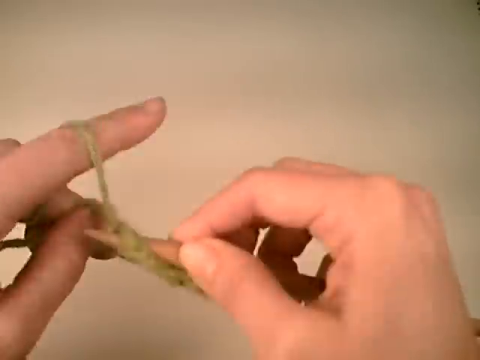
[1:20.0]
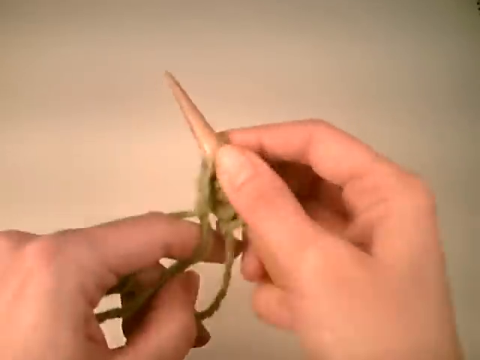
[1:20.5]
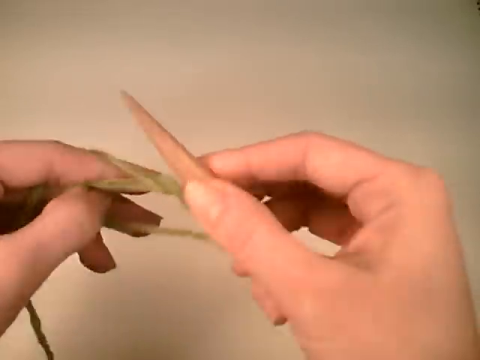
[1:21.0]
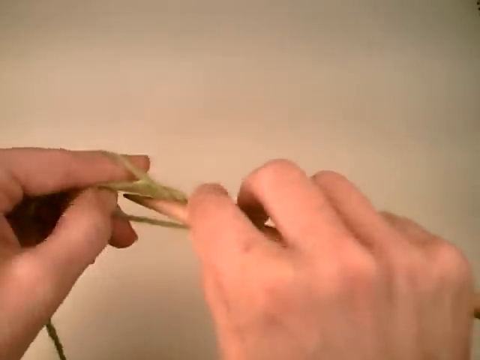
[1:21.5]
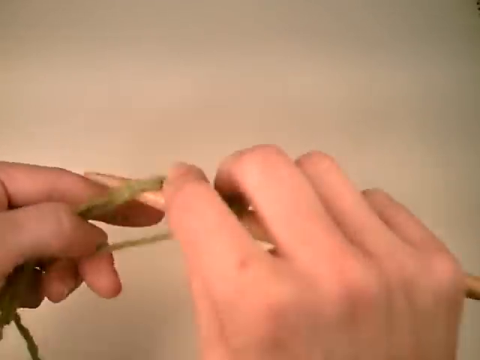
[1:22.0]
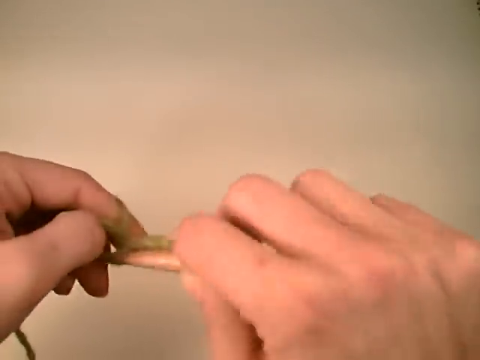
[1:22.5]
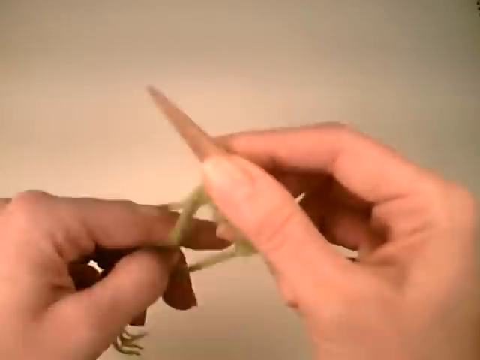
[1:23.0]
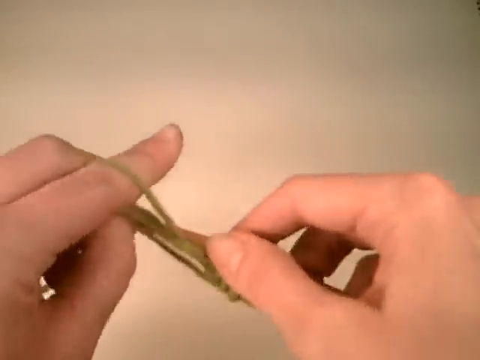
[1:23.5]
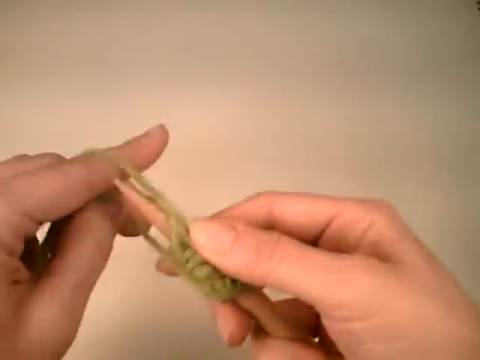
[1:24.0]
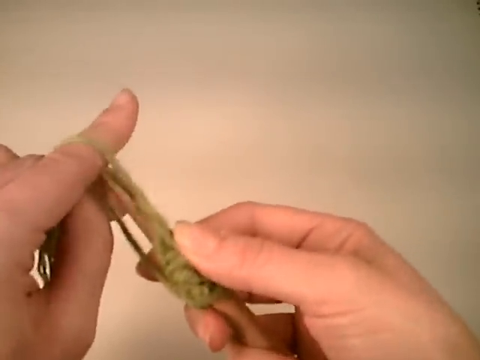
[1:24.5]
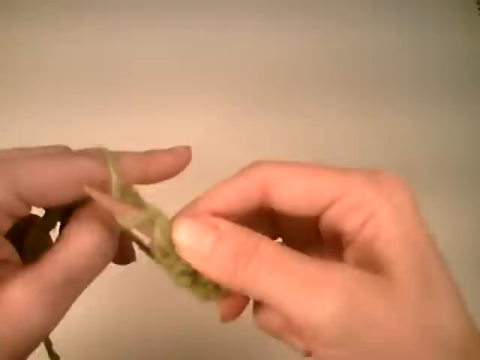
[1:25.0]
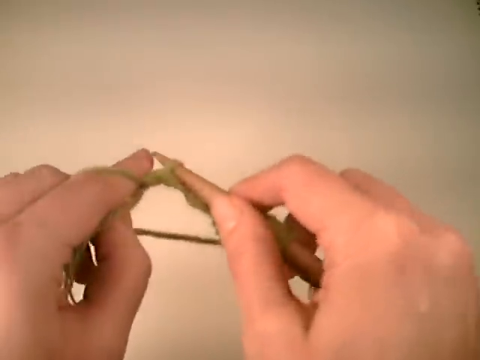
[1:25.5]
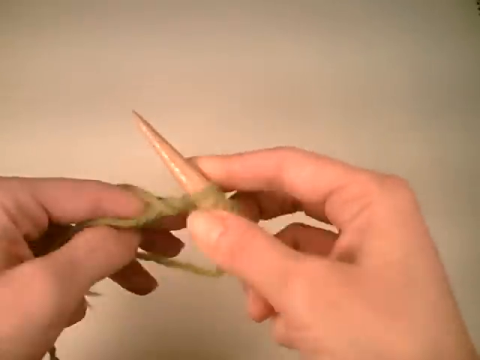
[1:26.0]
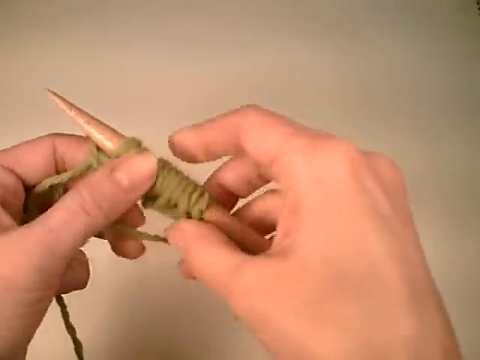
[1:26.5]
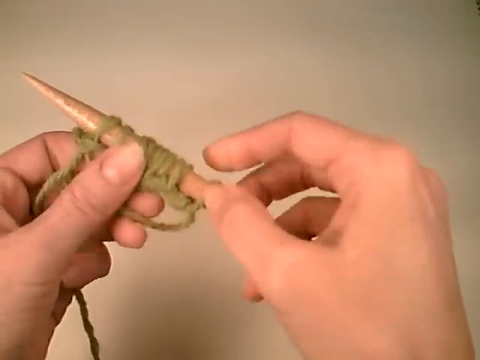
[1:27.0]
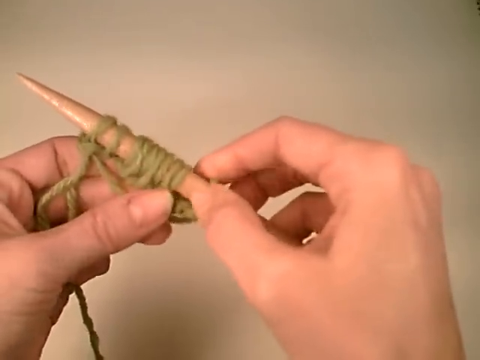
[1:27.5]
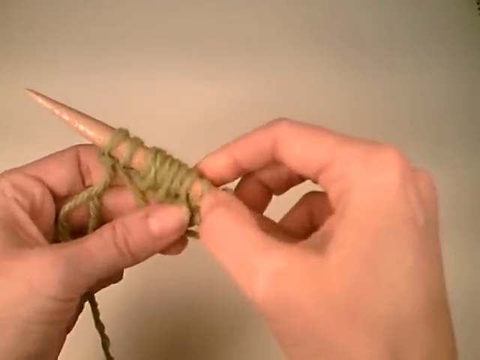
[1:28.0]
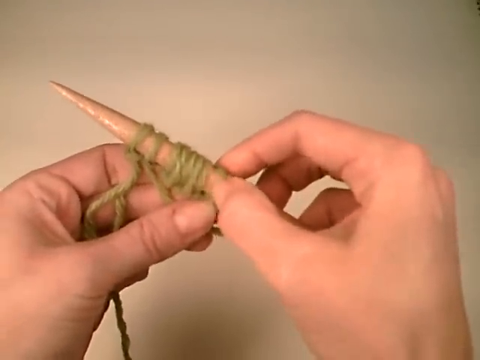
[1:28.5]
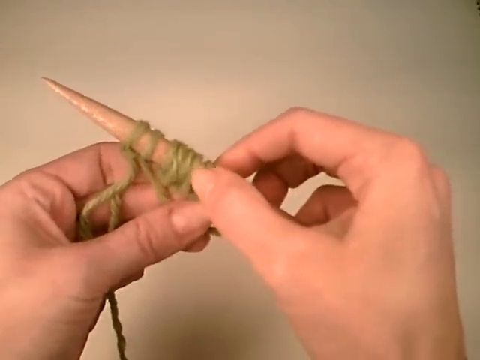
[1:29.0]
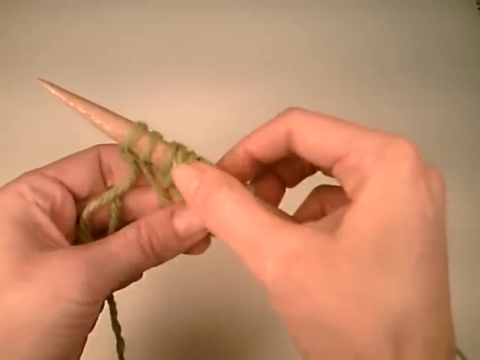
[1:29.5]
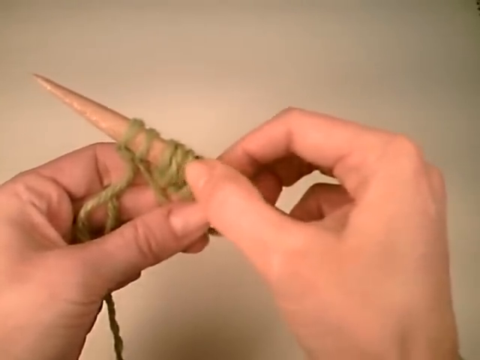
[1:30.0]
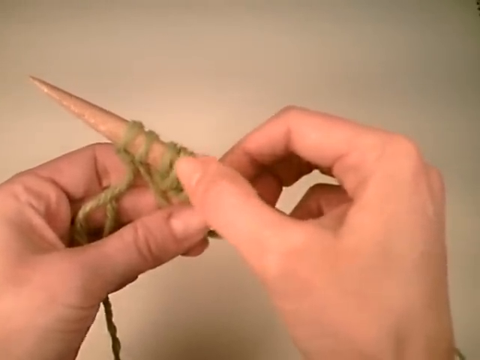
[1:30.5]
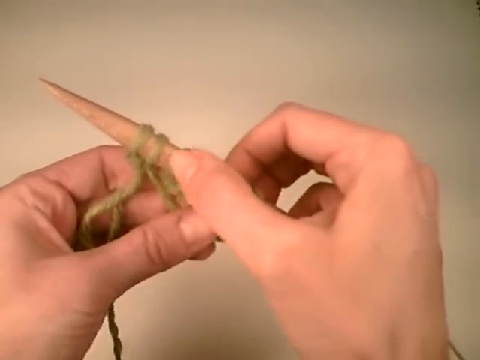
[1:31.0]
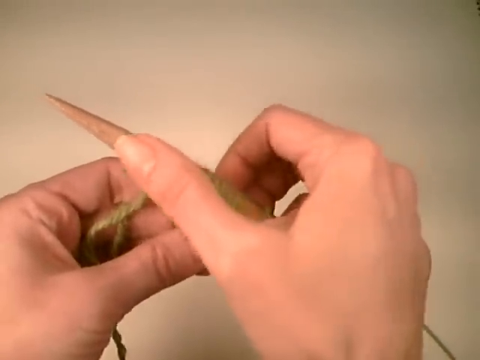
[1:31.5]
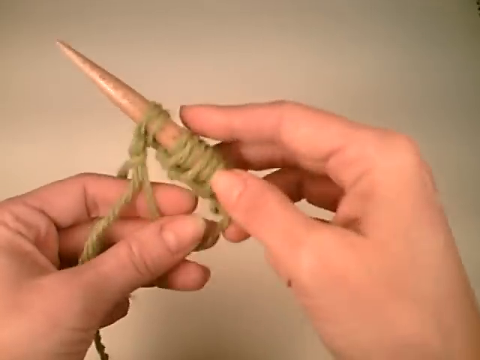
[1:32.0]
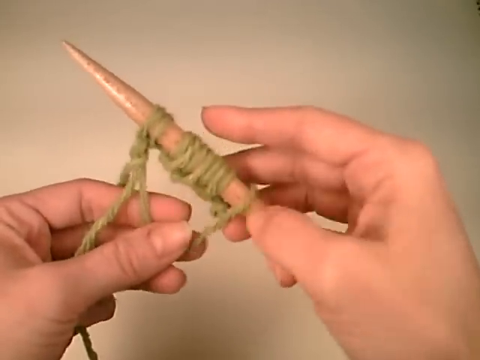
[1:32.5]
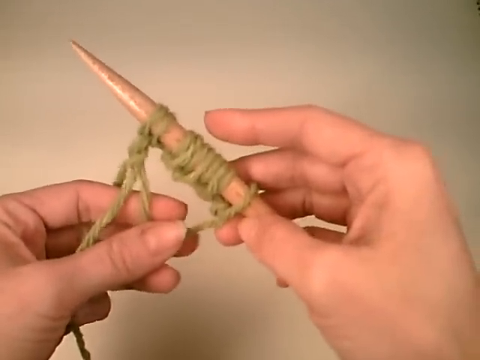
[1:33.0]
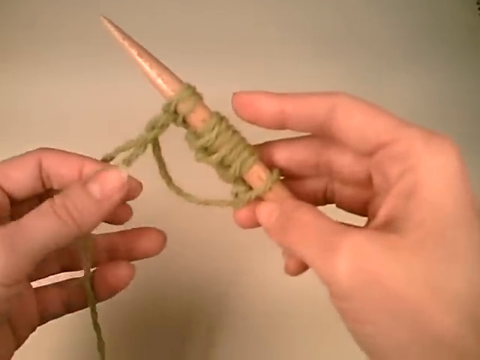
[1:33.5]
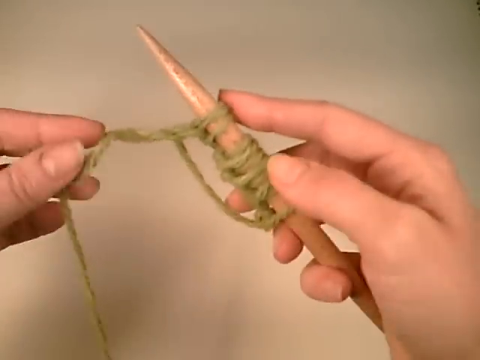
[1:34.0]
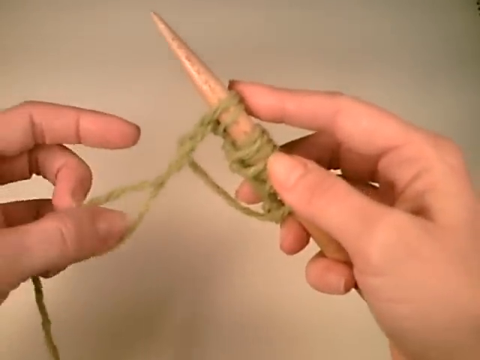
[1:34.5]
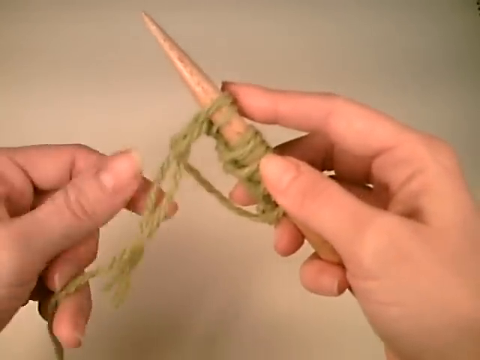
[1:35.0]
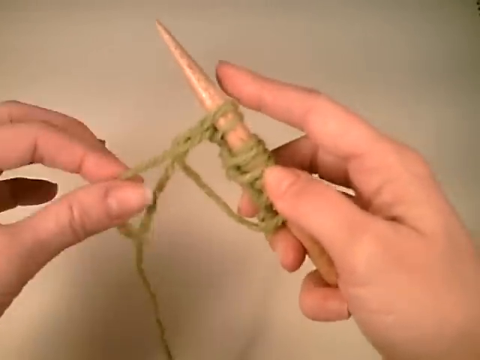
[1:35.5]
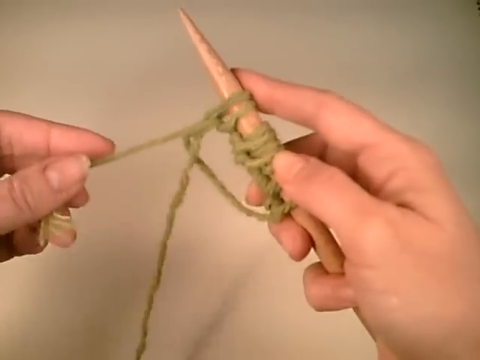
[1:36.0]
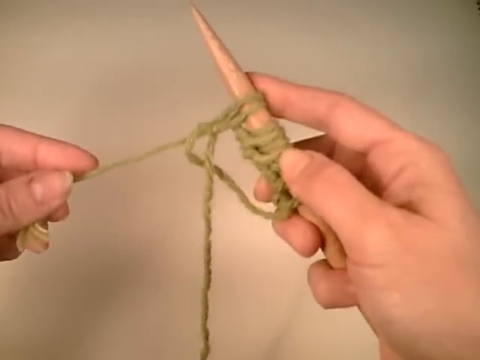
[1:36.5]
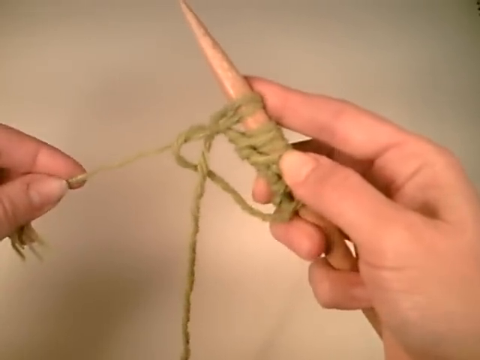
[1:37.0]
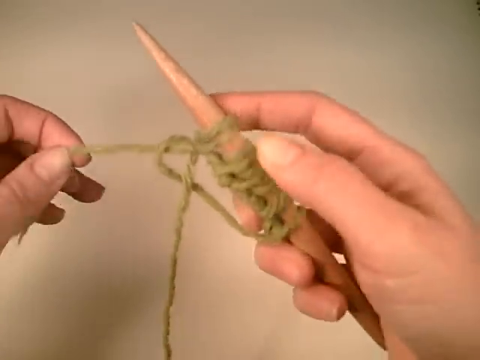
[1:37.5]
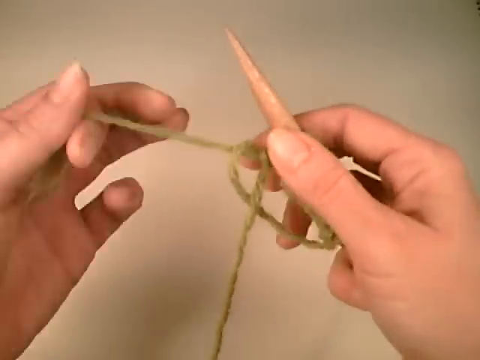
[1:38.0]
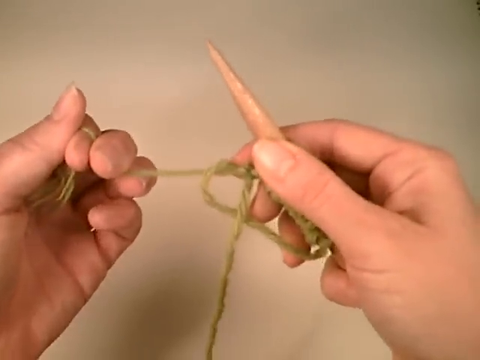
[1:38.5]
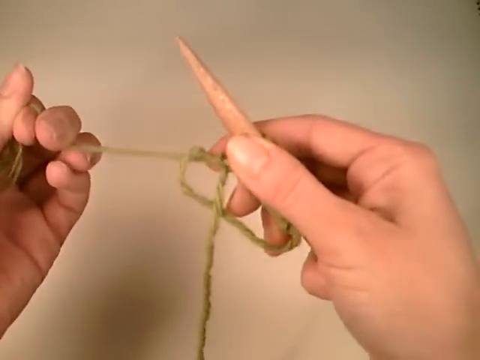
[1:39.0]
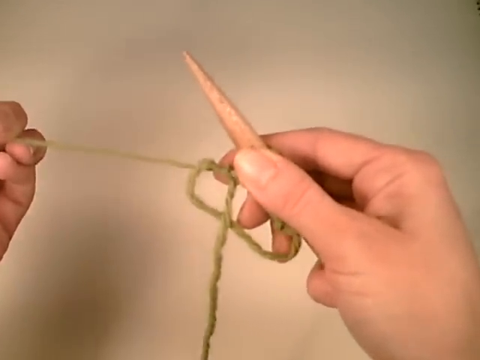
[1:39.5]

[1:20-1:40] Two hands knit against a brownish background, holding a wooden knitting needle and a golden thread. Some circular knots have been made around the needle, making them look like rings around the needle stem. The person is possibly a white woman, based on the skin. The whole needle is not visible; mainly the top pointed part and a bit of the middle section can be seen. The right hand holds the needle while the left hand holds the thread. At one point the woman appears to be counting the rings on the needle. Toward the end, she pulls a section of the thread.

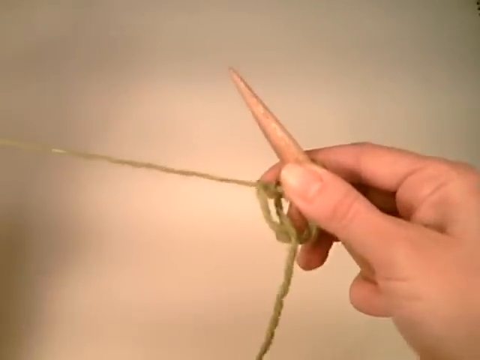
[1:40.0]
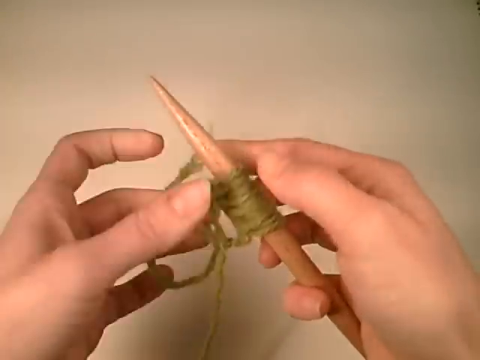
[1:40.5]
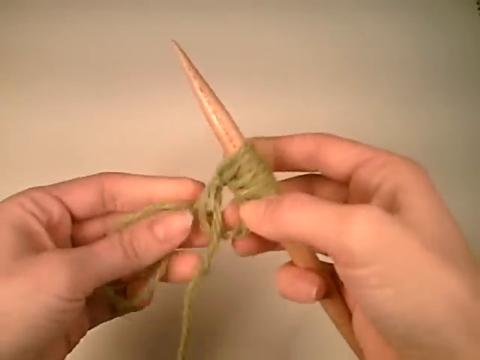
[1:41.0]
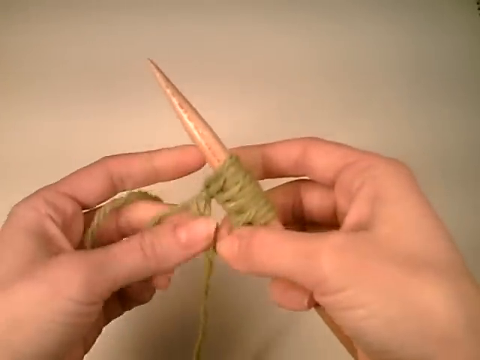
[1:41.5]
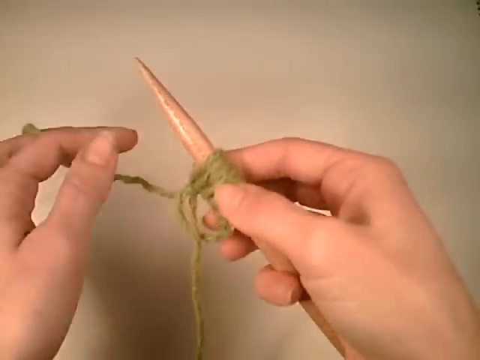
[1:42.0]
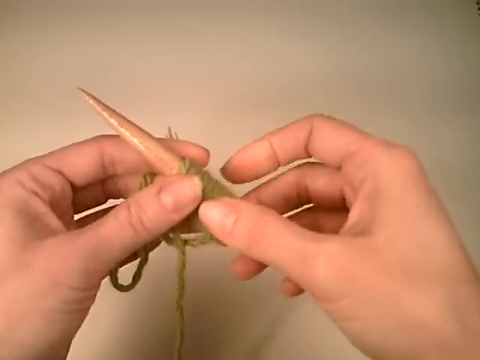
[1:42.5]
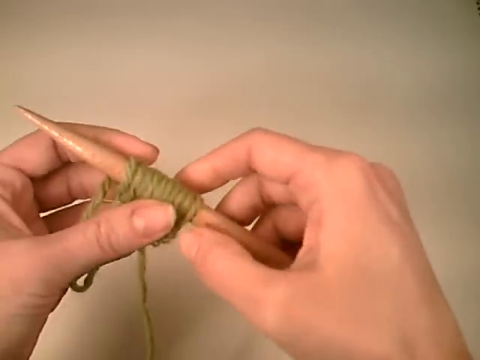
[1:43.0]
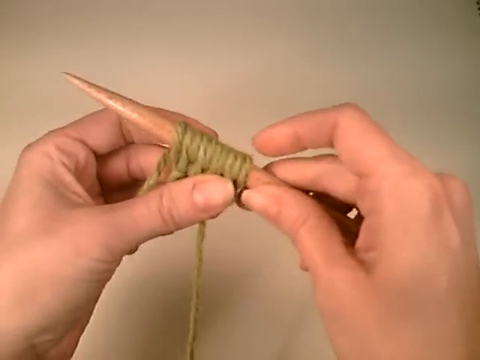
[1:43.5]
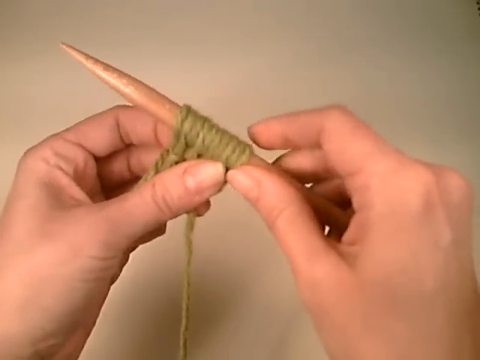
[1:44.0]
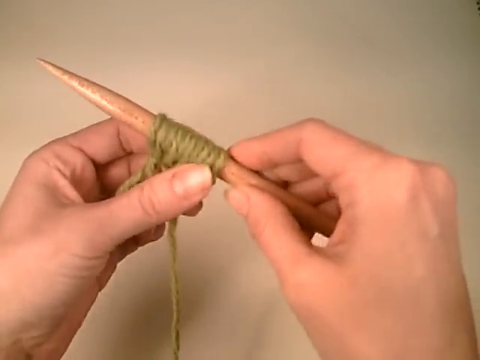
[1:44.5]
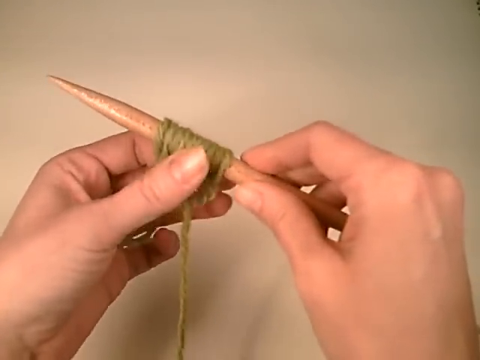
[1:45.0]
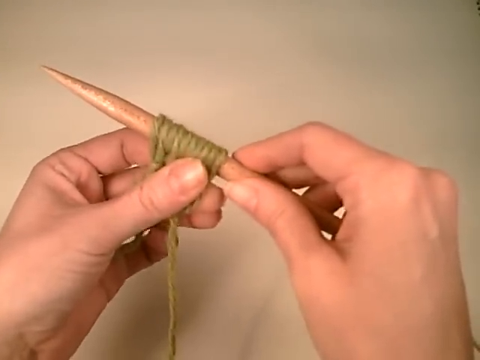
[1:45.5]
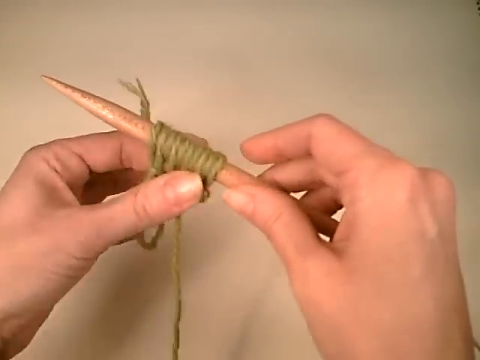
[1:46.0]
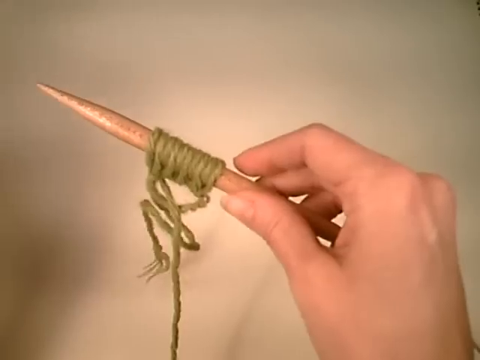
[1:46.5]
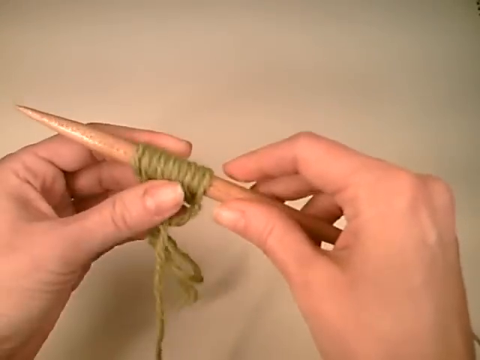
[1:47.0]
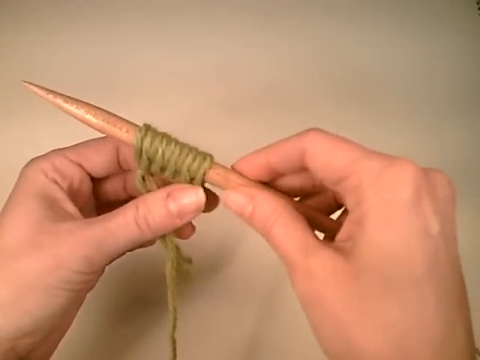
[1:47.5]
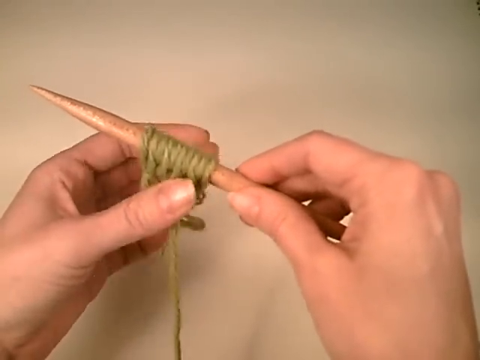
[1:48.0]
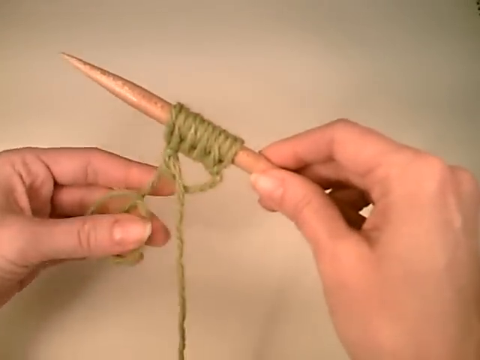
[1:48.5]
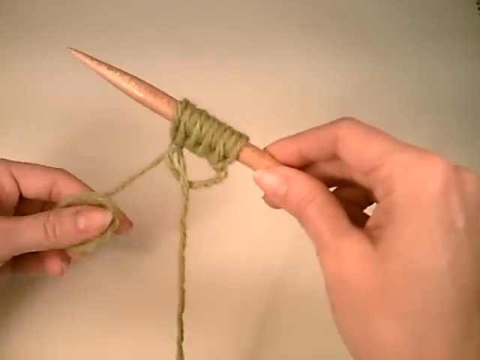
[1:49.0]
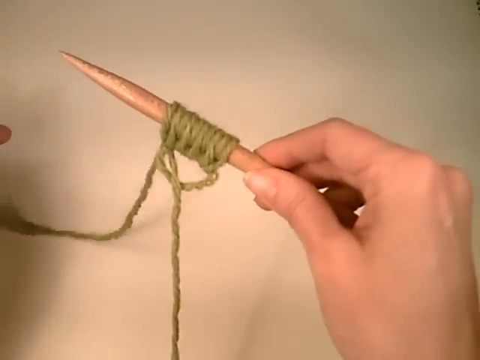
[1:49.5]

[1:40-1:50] Two hands knit against a brownish background, the right hand mainly holding the wooden knitting needle and the left hand mainly holding the thread. Circular knots are already on the stem of the needle, probably more than 10 rings. Two strands from the same thread extend from the intertwined part of the thread. The person is probably a white woman, based on the skin, and she seems to have some grown nails on her thumbs.